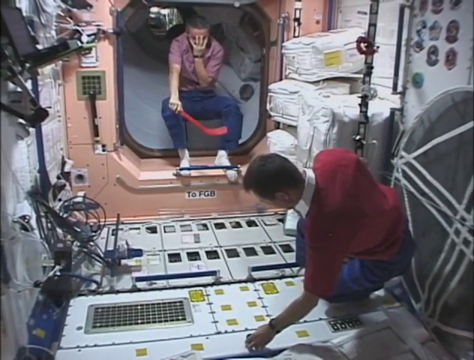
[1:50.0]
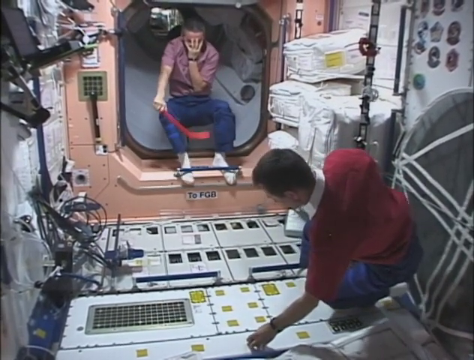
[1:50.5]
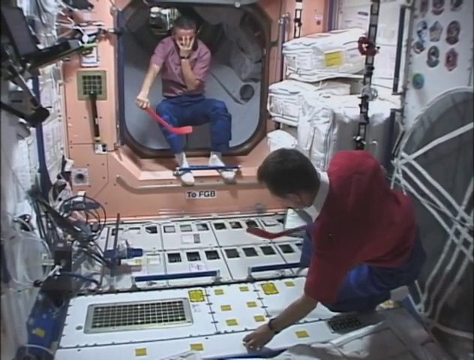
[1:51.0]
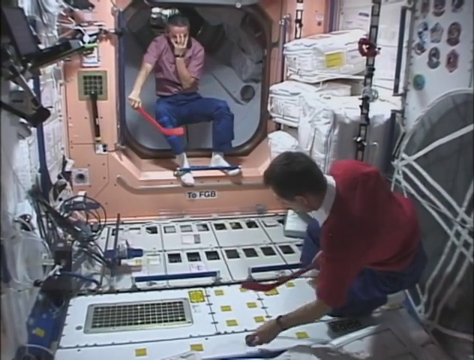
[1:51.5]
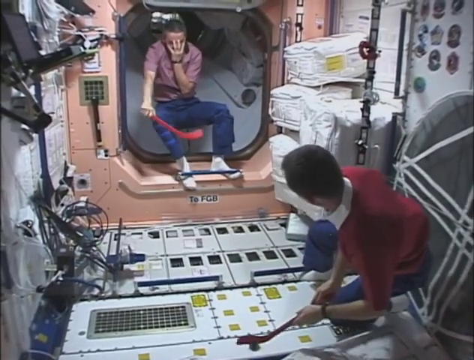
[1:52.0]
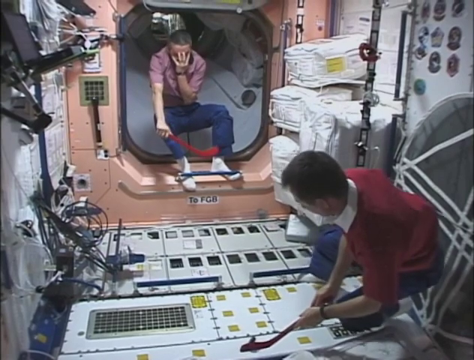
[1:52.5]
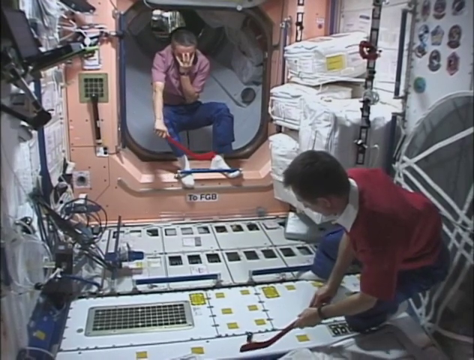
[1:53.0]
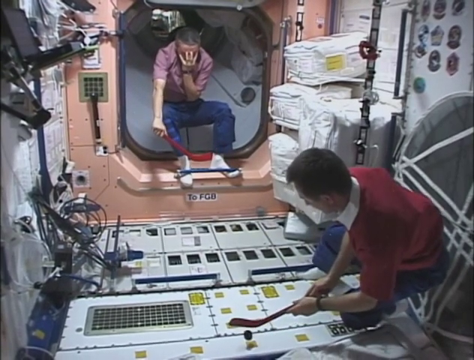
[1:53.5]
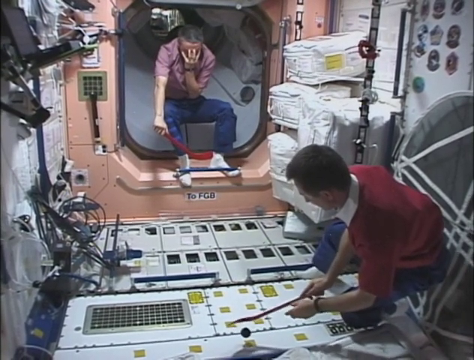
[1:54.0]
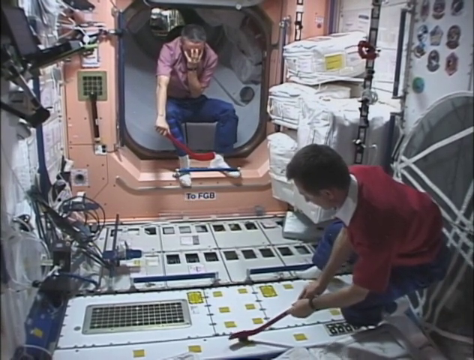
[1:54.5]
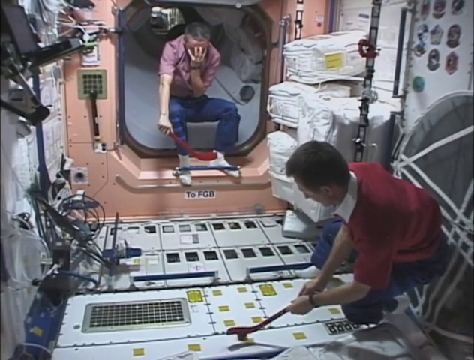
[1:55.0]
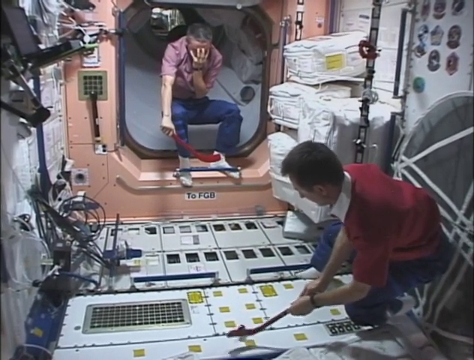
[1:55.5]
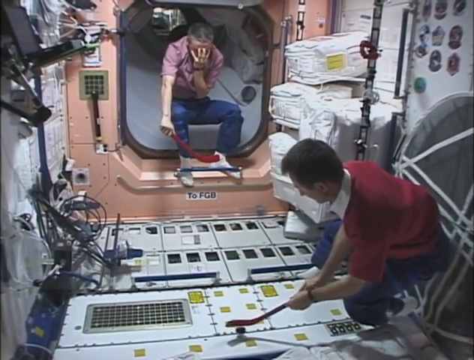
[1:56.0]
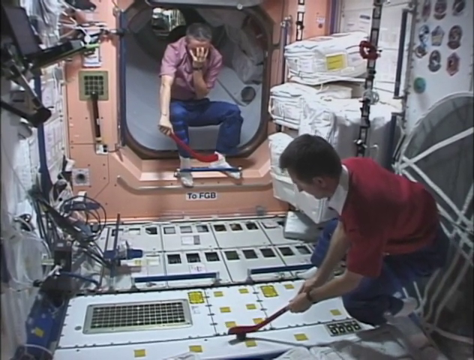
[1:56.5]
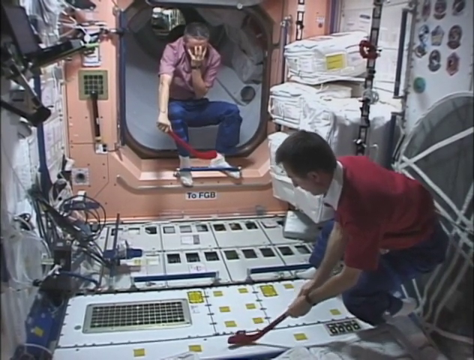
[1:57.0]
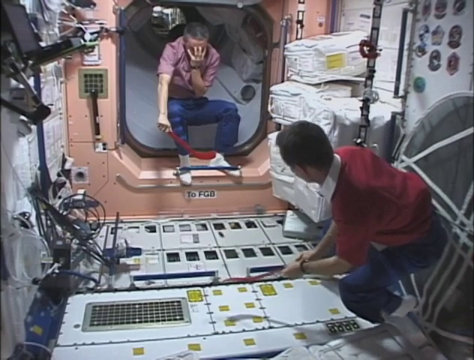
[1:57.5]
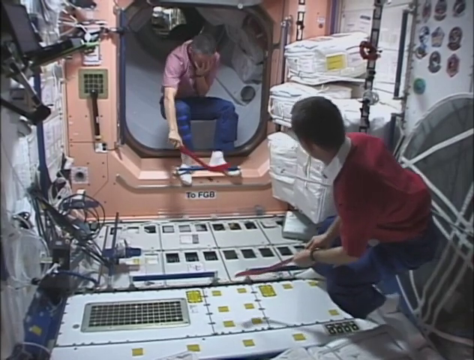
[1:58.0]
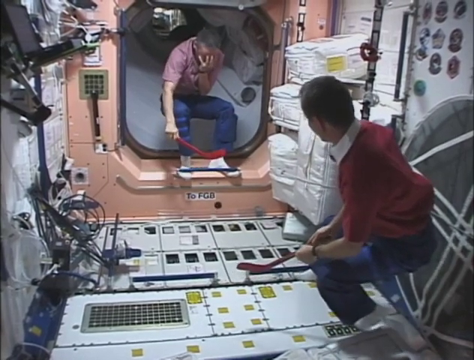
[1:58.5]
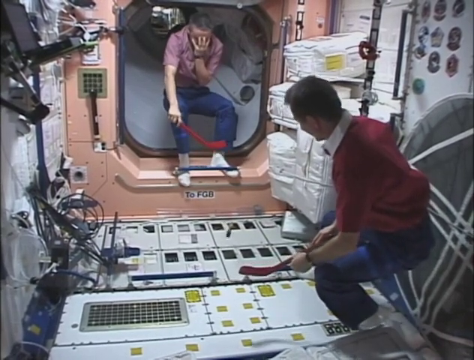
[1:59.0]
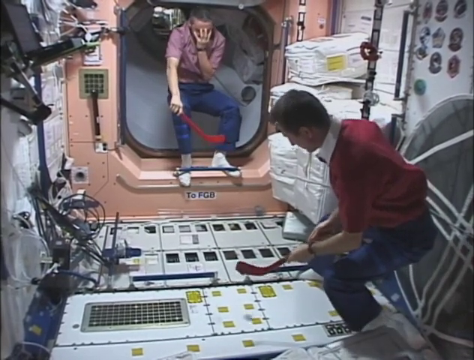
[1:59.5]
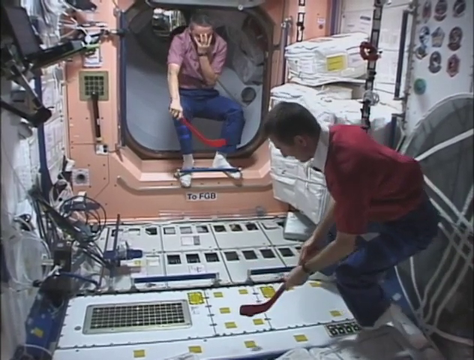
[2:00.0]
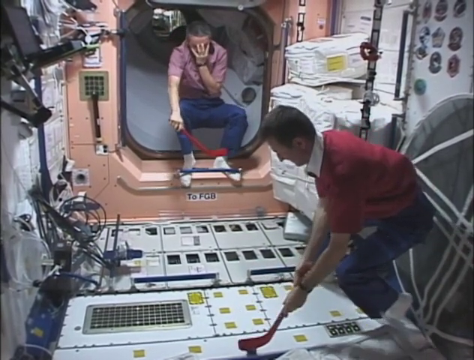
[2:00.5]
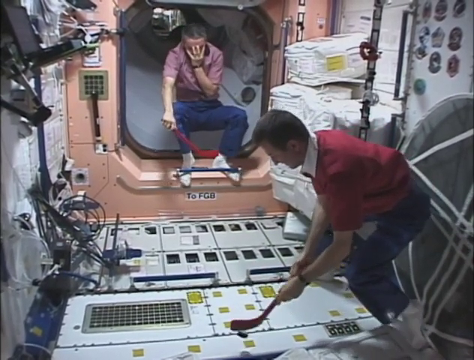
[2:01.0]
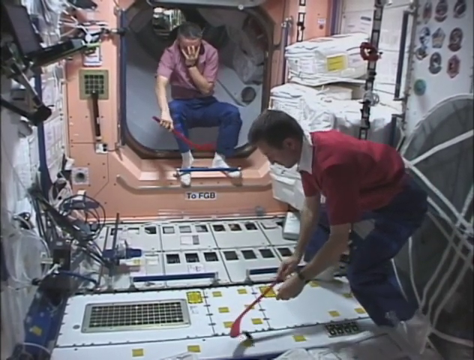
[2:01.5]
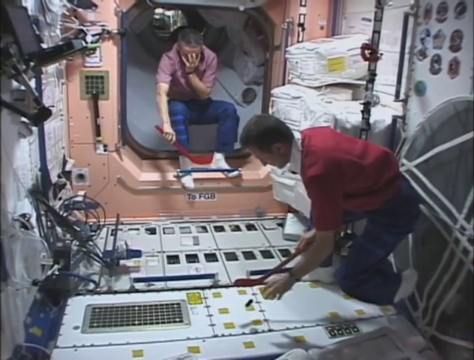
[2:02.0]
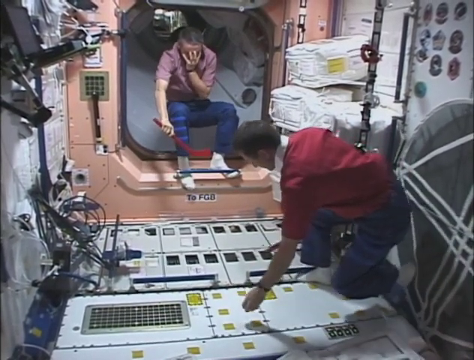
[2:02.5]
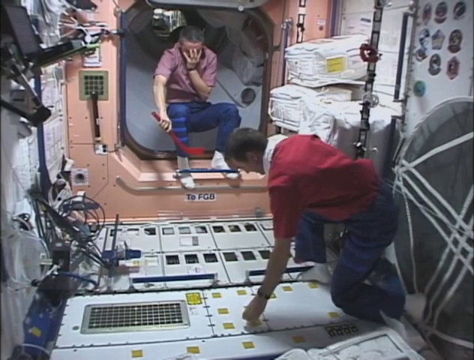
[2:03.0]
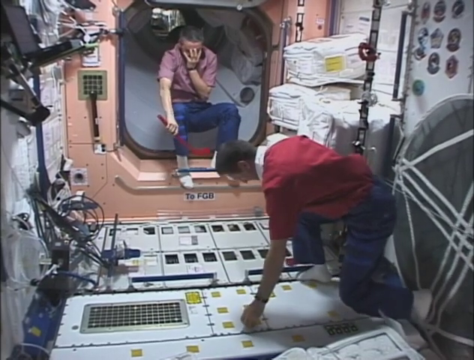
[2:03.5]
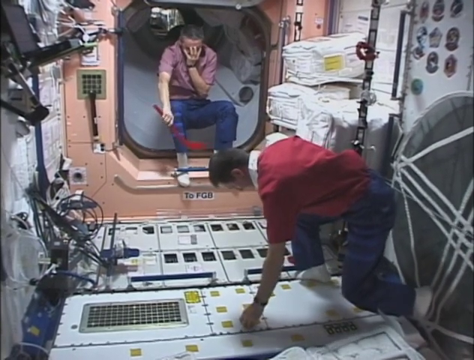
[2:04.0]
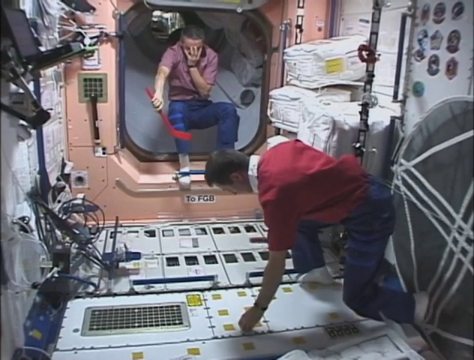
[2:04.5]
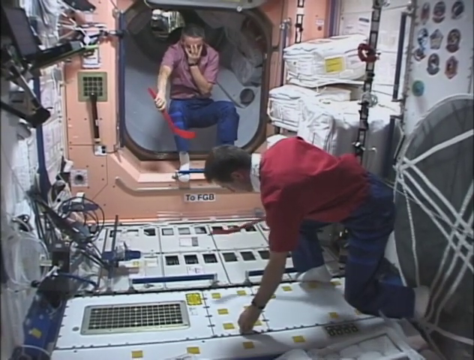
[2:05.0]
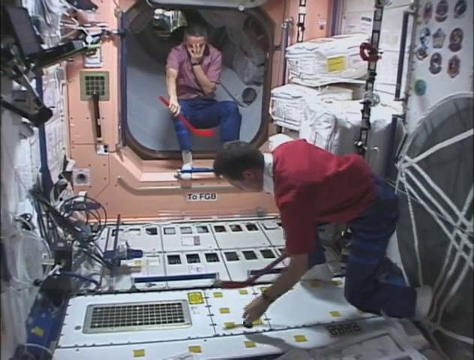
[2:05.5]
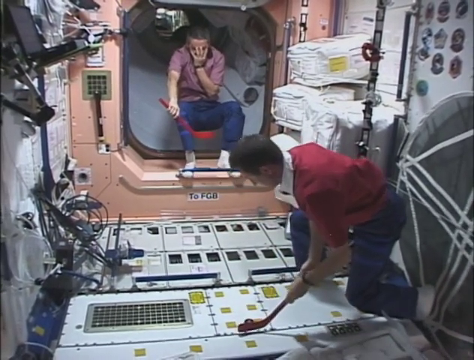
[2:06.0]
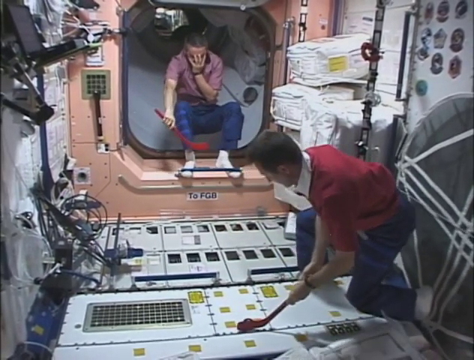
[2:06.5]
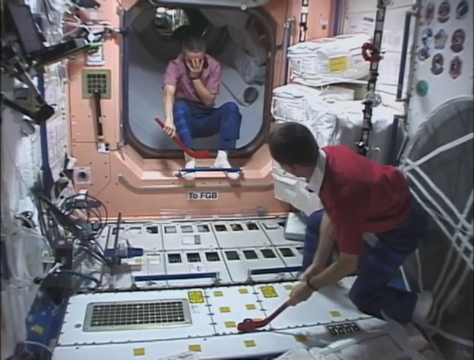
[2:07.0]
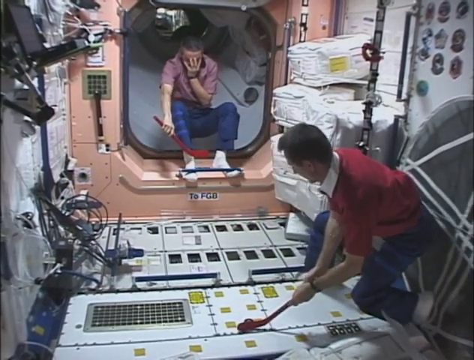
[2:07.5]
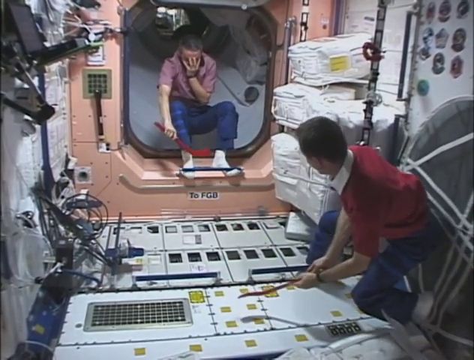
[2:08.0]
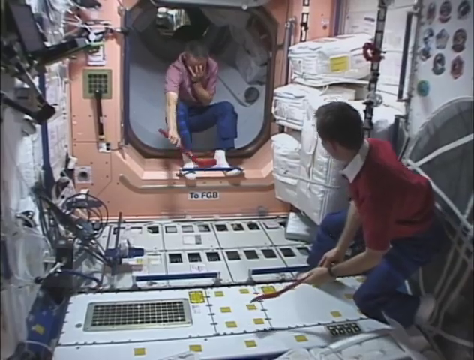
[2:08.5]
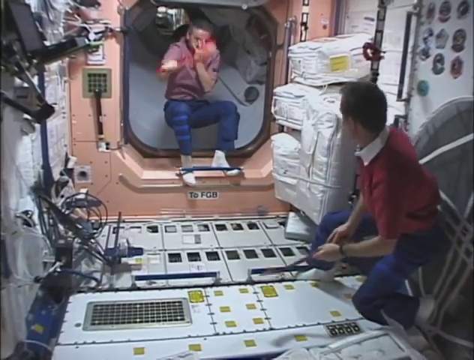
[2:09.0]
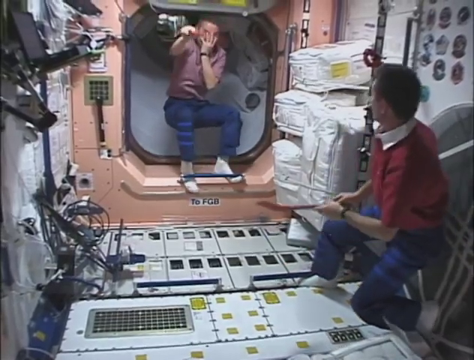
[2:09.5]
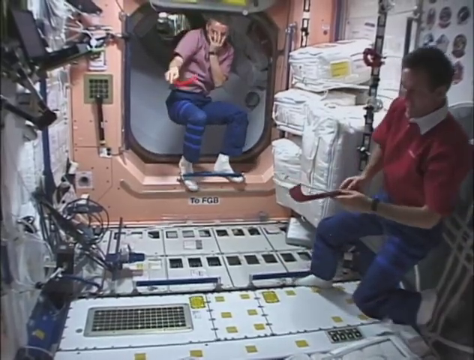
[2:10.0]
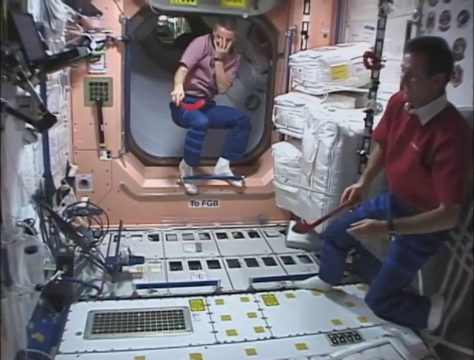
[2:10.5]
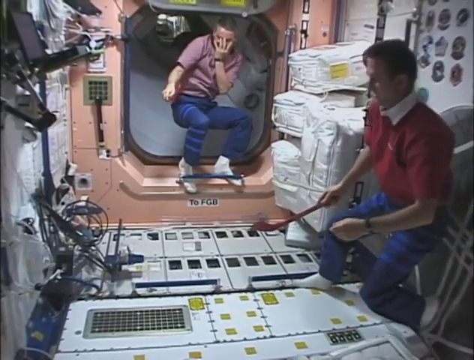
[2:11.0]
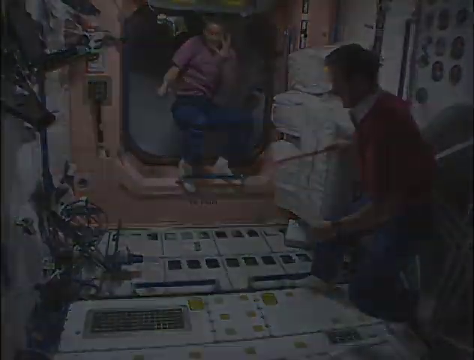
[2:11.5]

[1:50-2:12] The man on the left is kneeling over with his hand on the puck. The man on the right sits inside an open area that leads to a tube or tunnel area behind him; his left hand is over his face, he wears a black watch, and he holds the hockey stick in front of him, waiting for the man on the left to hit the puck. The man on the left steadies the puck and hits it, the man on the right returns it, and the man on the left has to pick up the puck with his hand to steady it on the ground before hitting it again. The man on the right bats the puck down. The open area is pink and elevated, so that one steps up and into it.